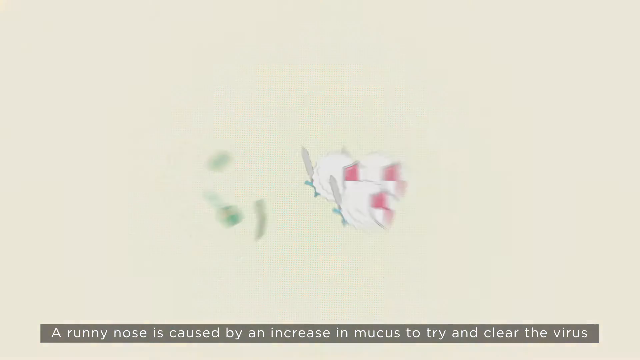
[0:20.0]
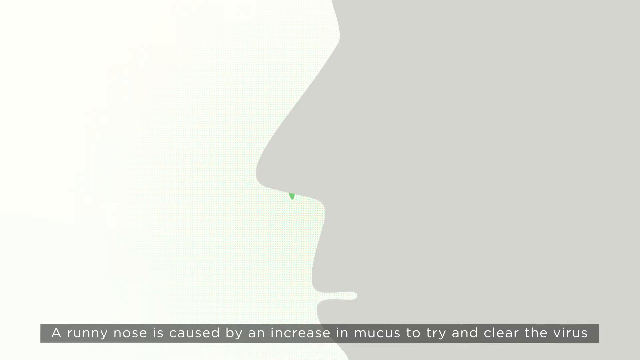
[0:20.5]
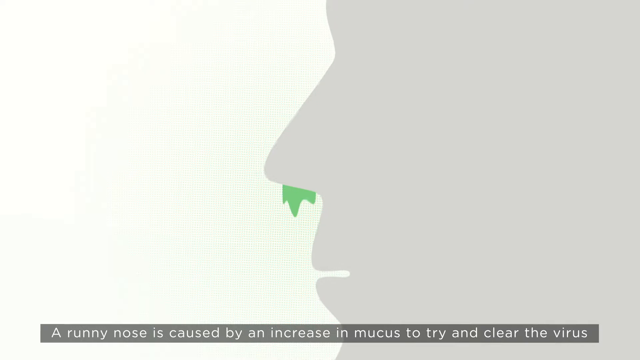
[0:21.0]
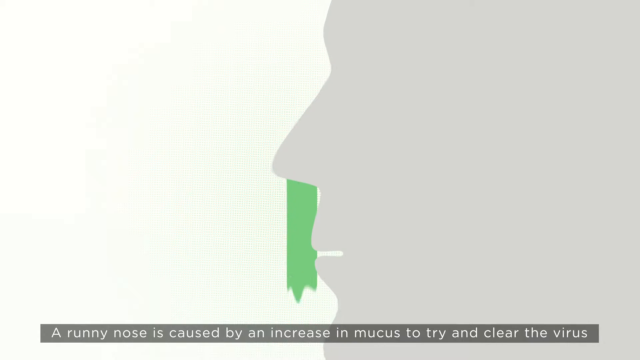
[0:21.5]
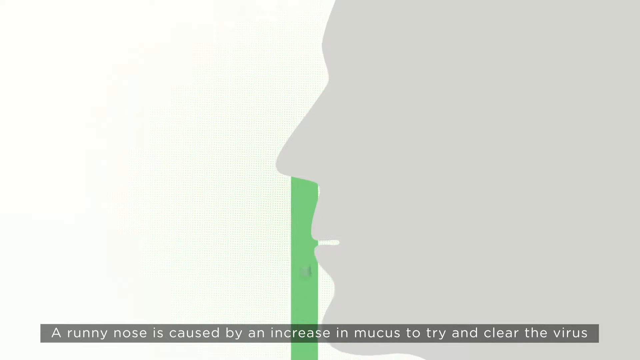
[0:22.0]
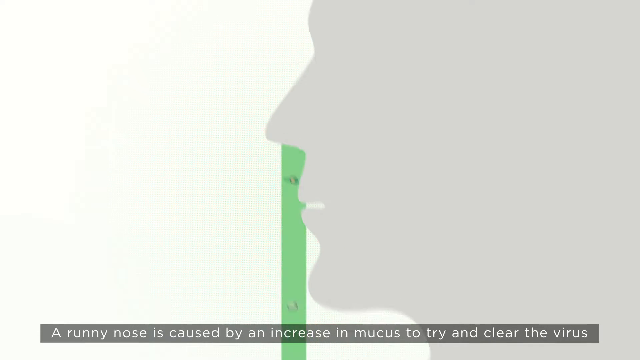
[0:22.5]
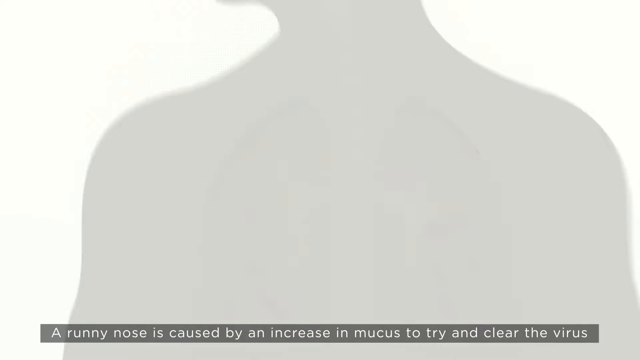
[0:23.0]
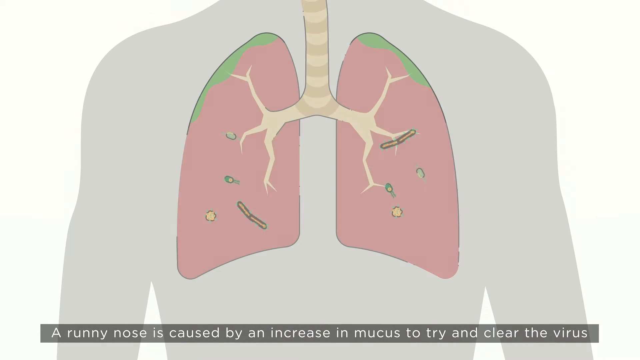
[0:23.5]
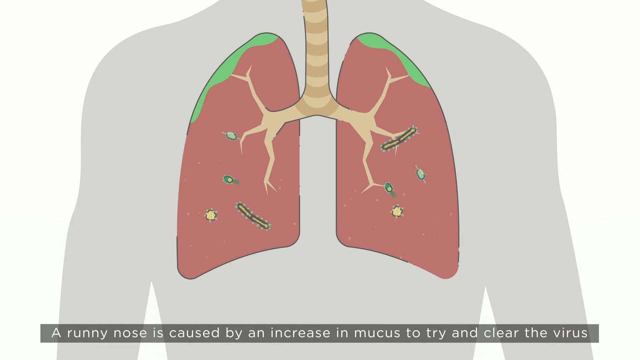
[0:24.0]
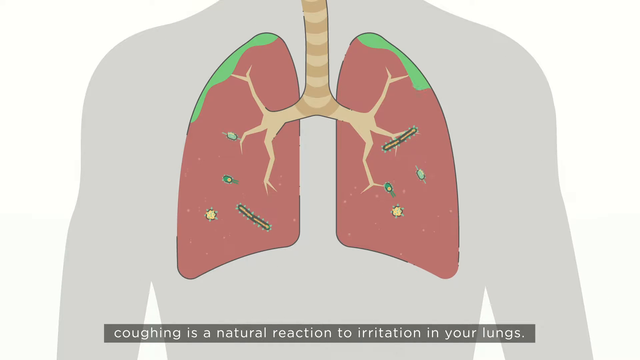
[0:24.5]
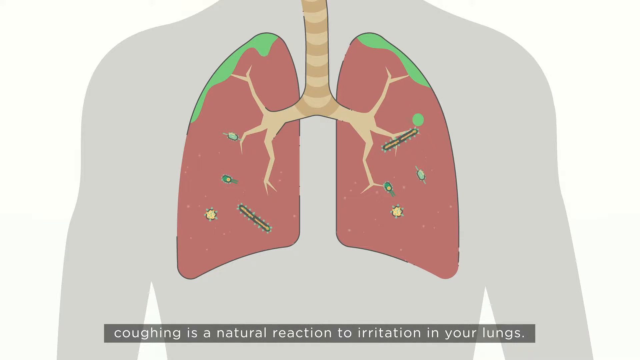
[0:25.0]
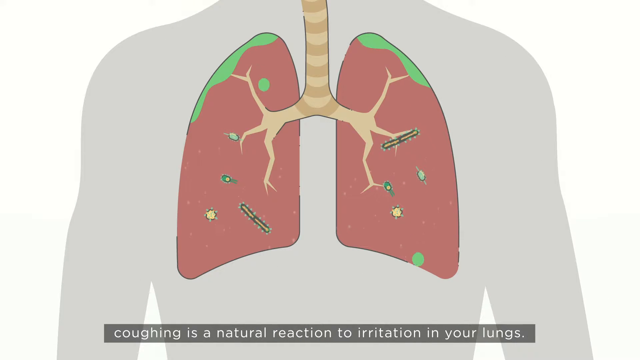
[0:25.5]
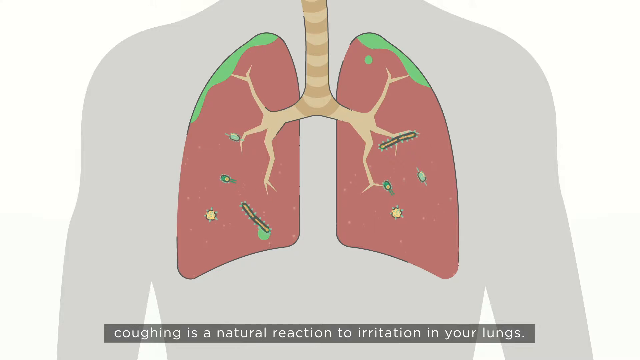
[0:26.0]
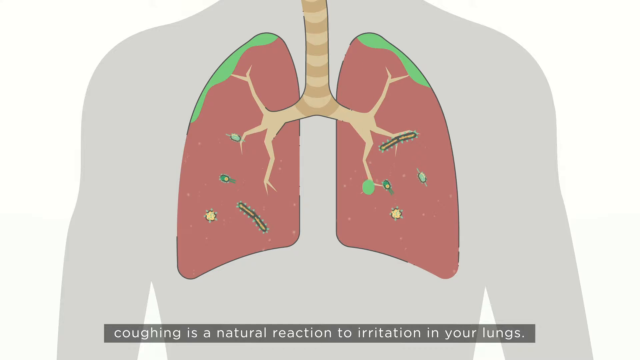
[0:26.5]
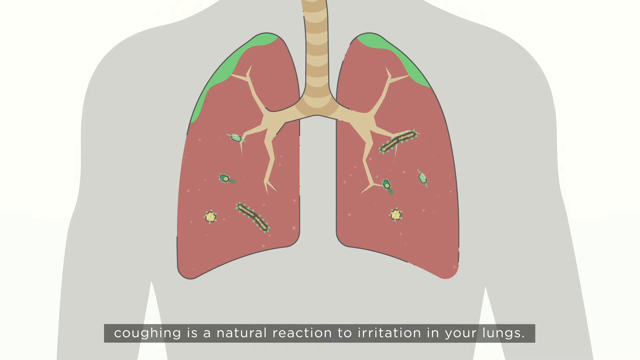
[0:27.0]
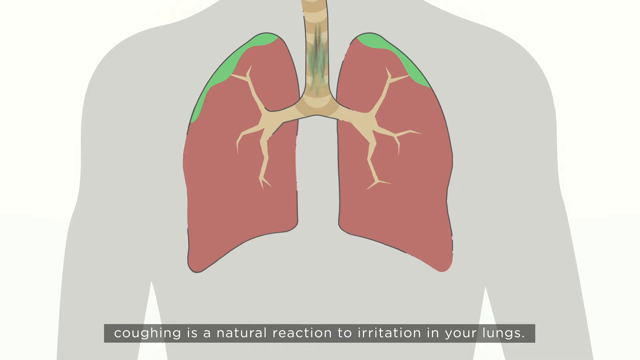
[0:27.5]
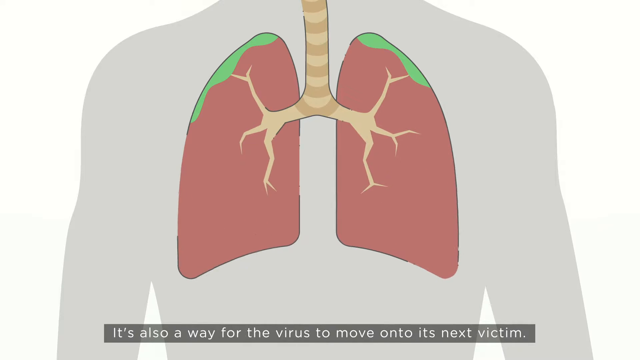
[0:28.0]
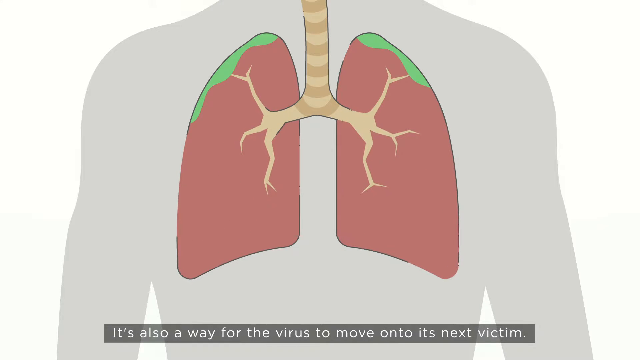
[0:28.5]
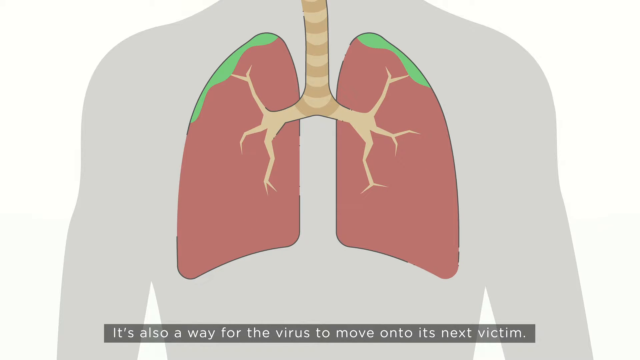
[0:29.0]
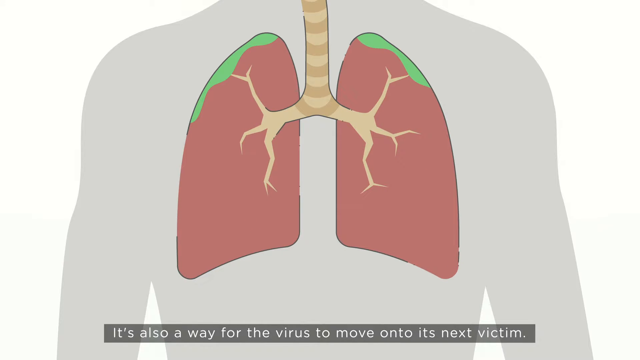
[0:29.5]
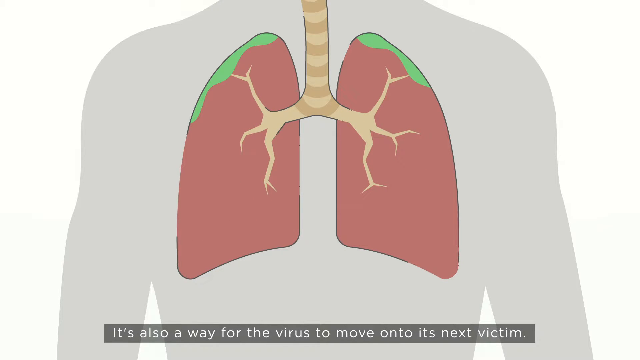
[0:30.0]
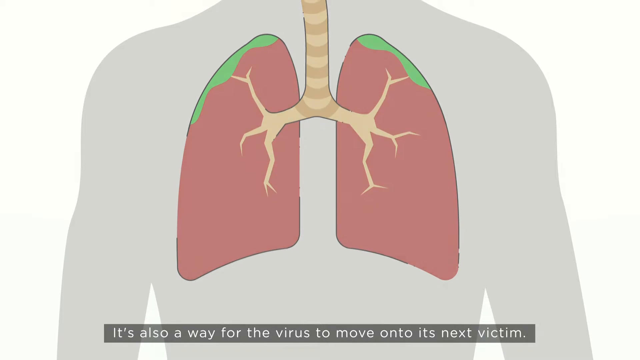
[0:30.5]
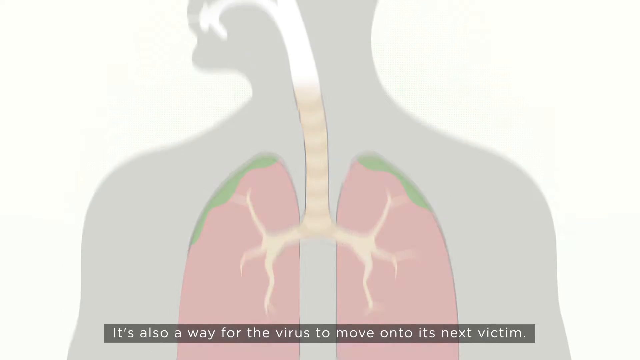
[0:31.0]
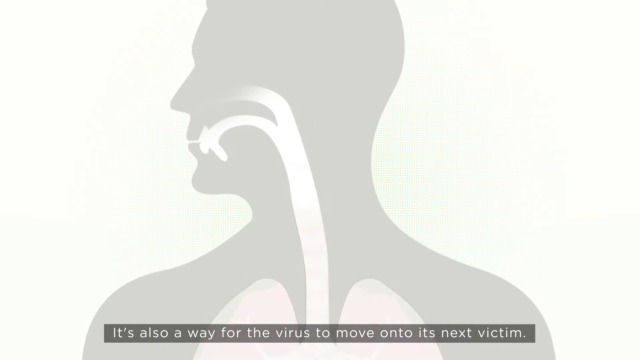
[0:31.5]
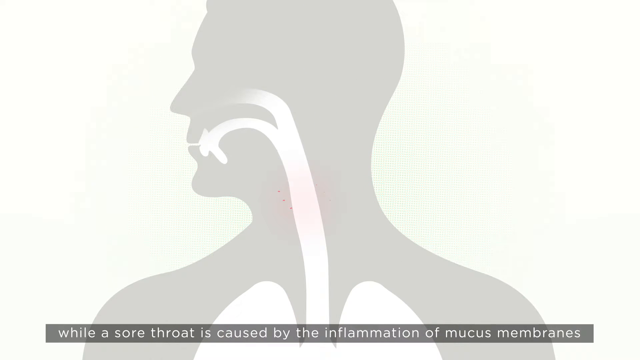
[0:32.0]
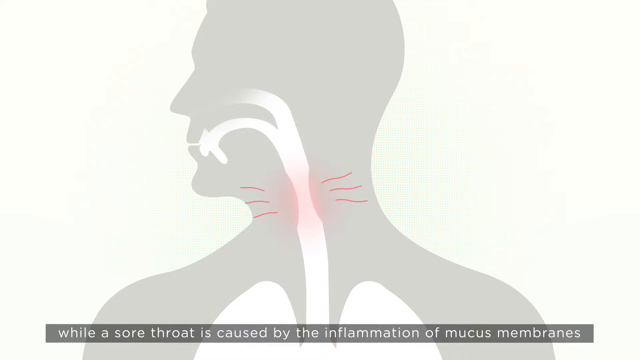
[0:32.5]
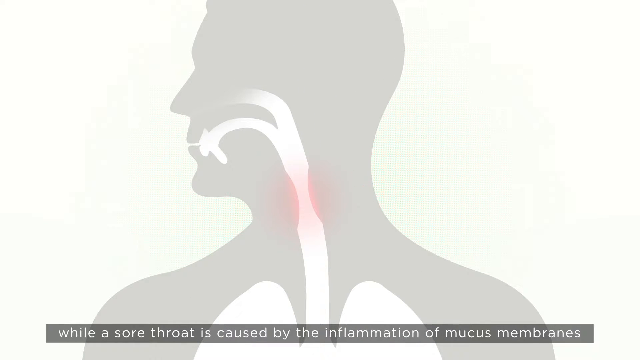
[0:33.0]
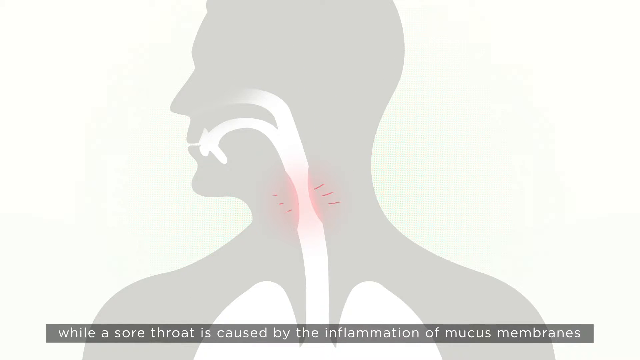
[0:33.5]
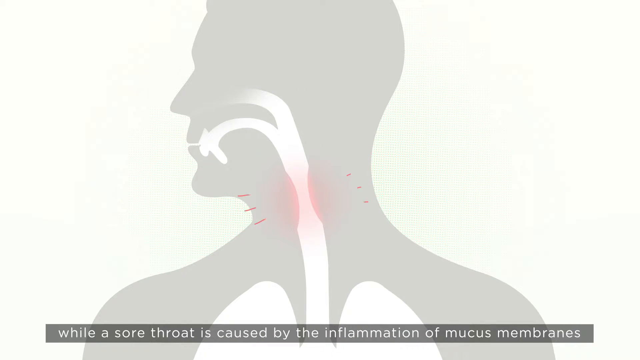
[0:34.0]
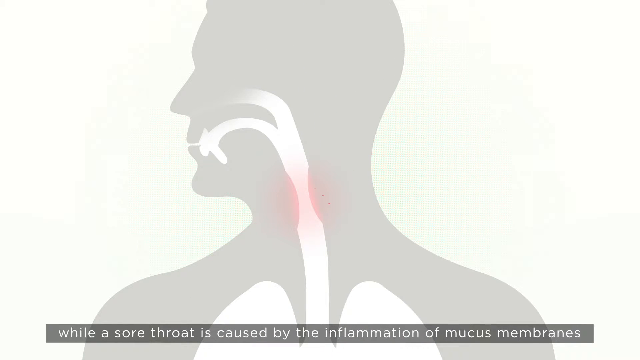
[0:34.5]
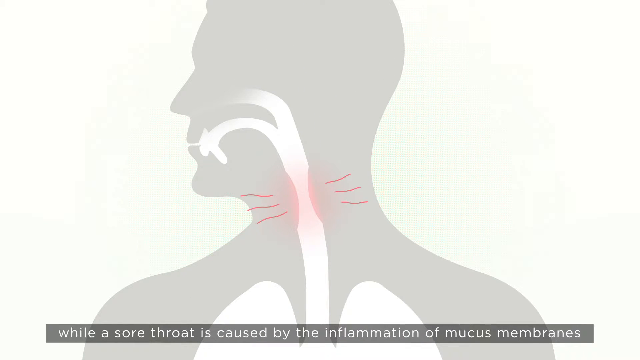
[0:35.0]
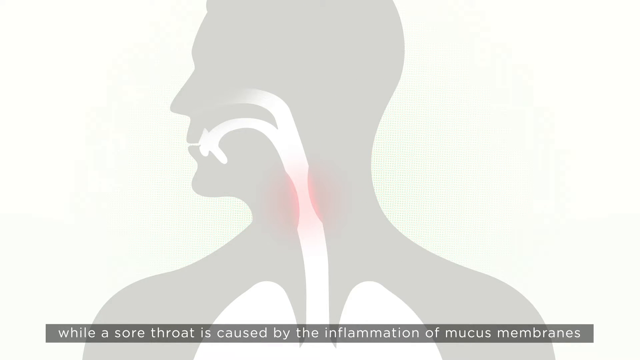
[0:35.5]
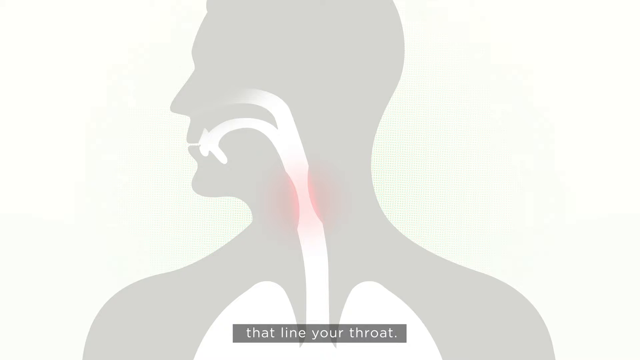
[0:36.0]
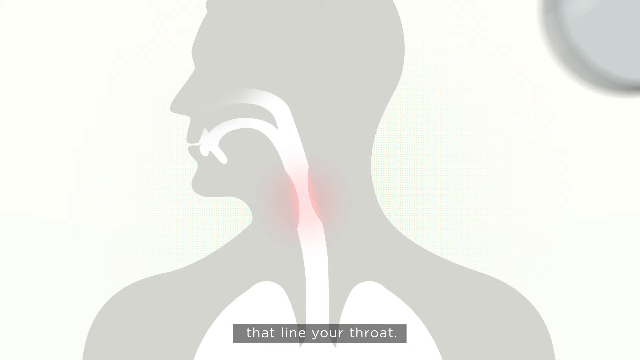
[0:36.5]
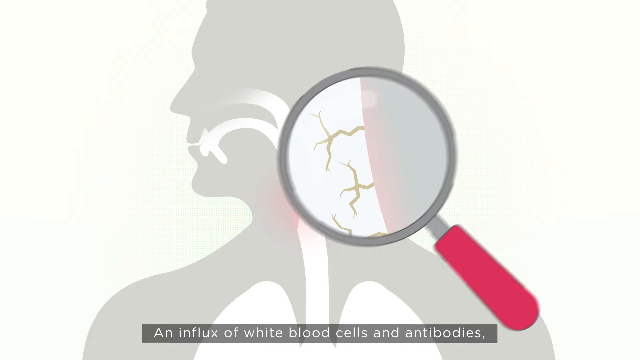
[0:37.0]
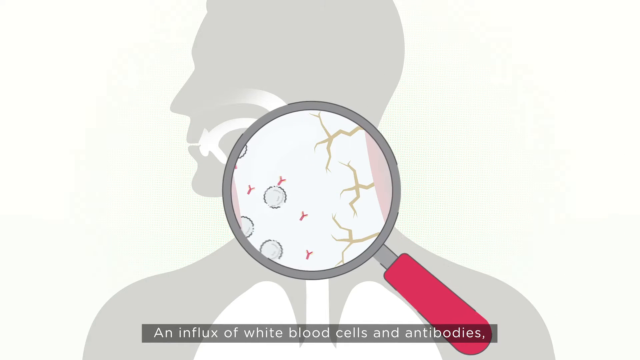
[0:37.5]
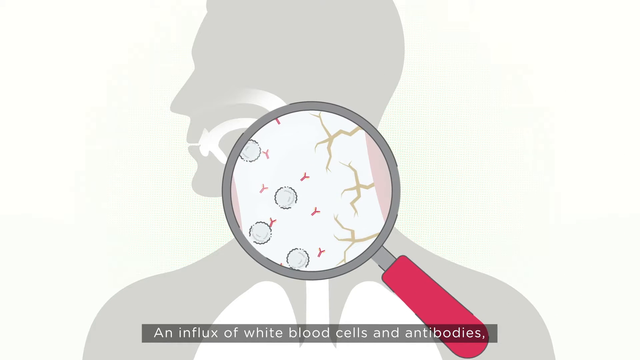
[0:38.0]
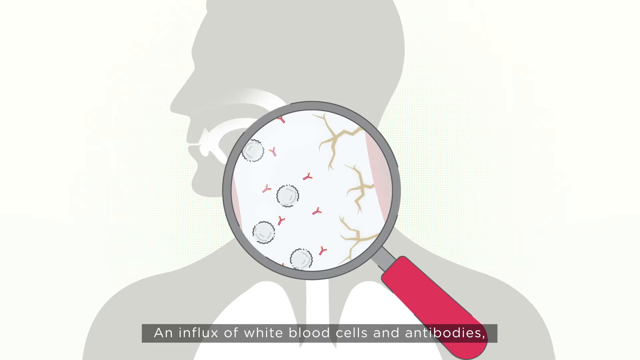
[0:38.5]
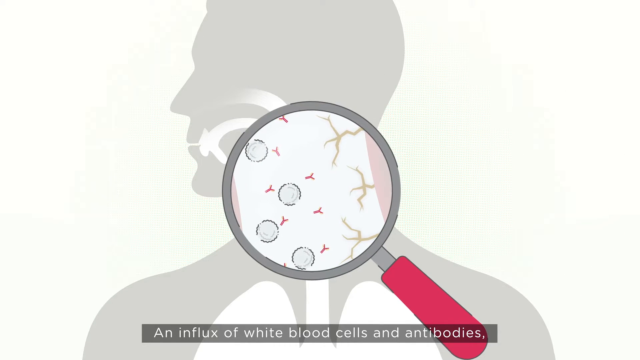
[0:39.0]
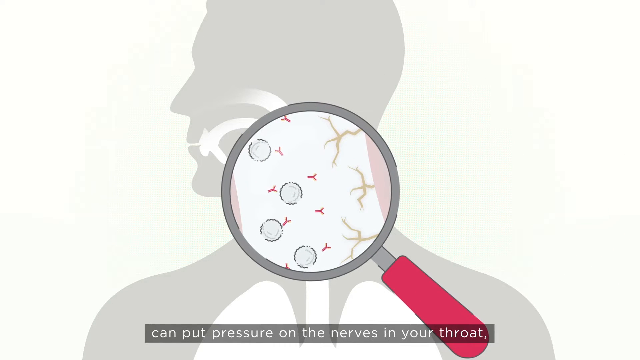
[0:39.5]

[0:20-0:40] Three little animated white blood cells dressed as knights with shields and armor attack some small bacteria. The view quickly zooms out to a background that is white on the left, with a gray silhouette of a person's face on the right and green snot pouring out of the silhouette's nose. It zooms out to show the silhouette's chest area, then apparently zooms inside to show red animated lungs with green mucus on top. Little bacteria appear inside the lungs, four on each side. The mucus seems to drip through the lungs, the lungs pump, and the bacteria run up through the throat as small red symbols appear to show throat irritation and pain. A magnifying glass then zooms in on little bacteria inside the throat, seemingly attacking the throat walls, which causes the pain. Throughout, the bacteria are animated as green and yellow, blob-like shapes floating around in the body.